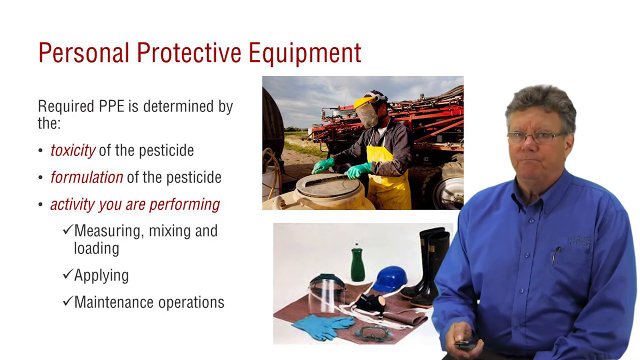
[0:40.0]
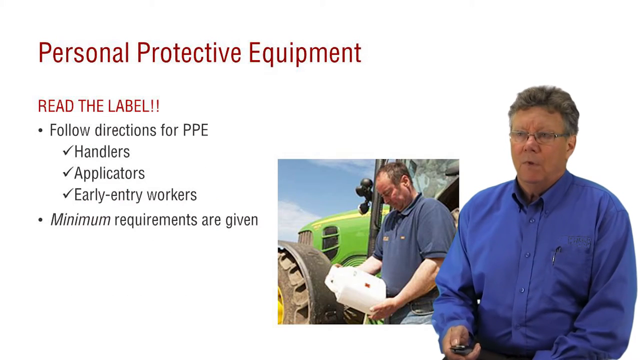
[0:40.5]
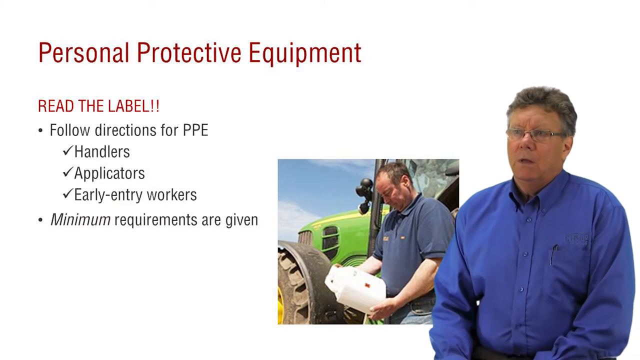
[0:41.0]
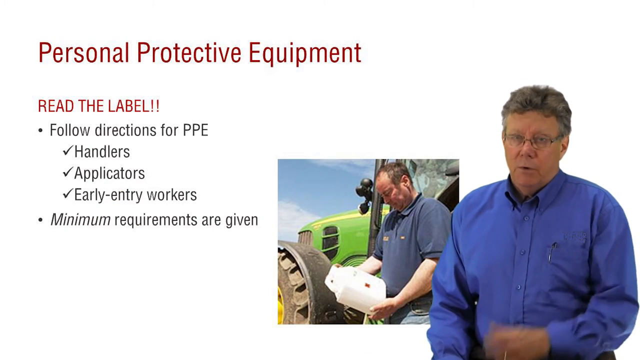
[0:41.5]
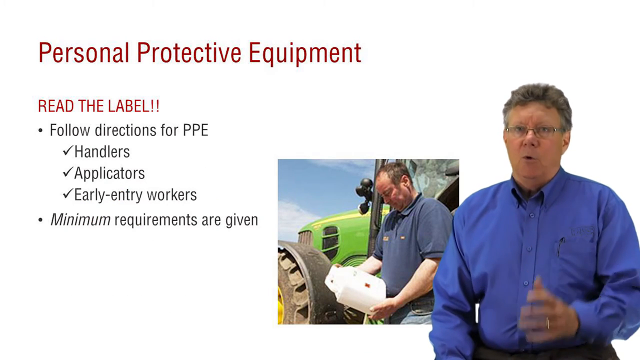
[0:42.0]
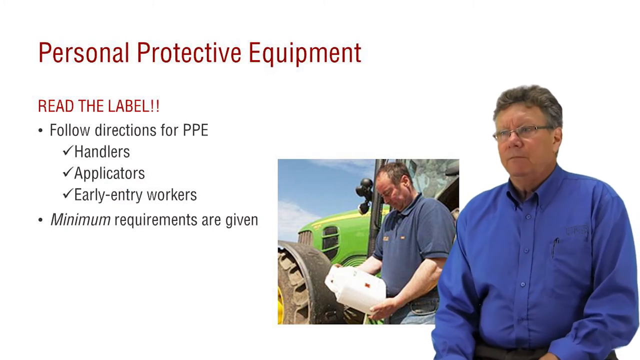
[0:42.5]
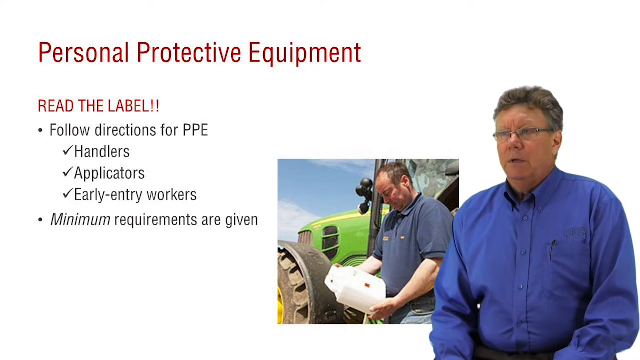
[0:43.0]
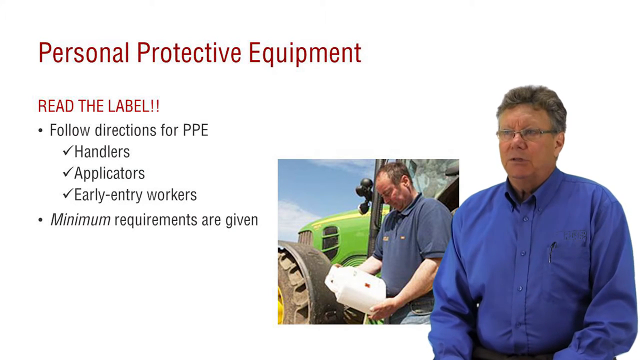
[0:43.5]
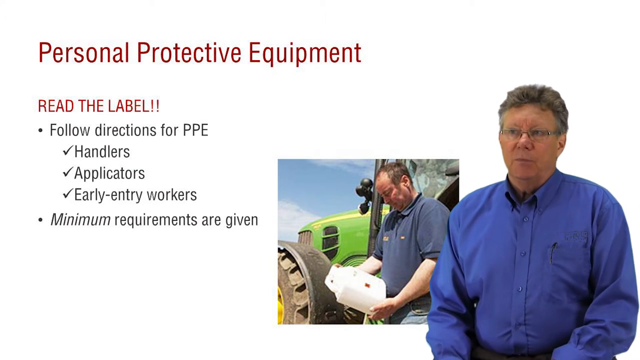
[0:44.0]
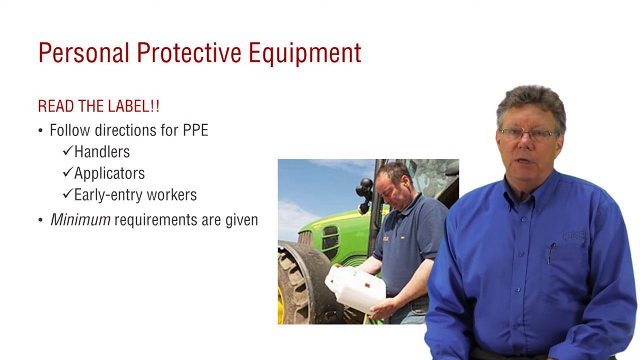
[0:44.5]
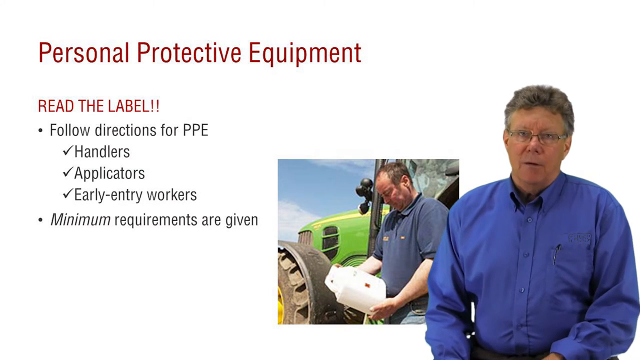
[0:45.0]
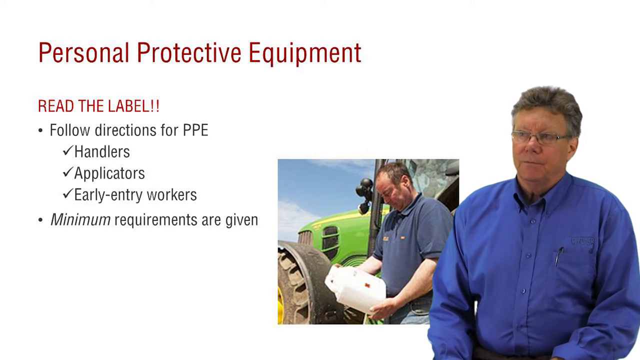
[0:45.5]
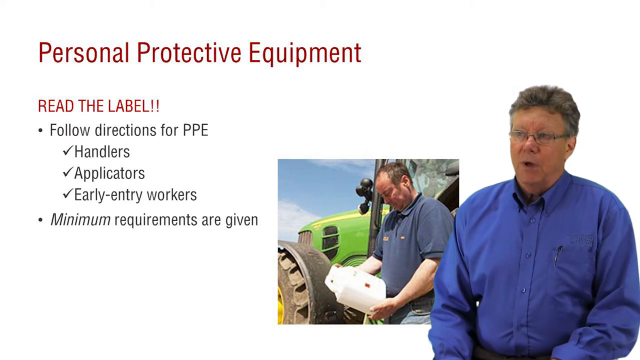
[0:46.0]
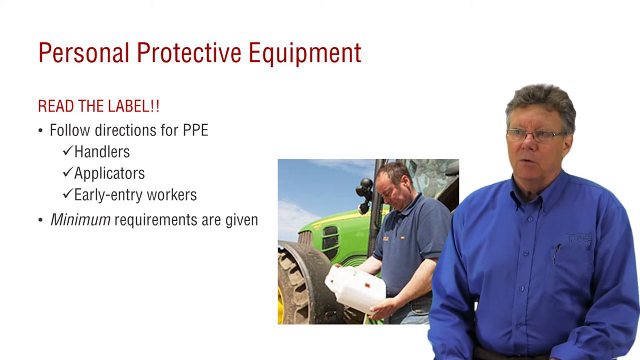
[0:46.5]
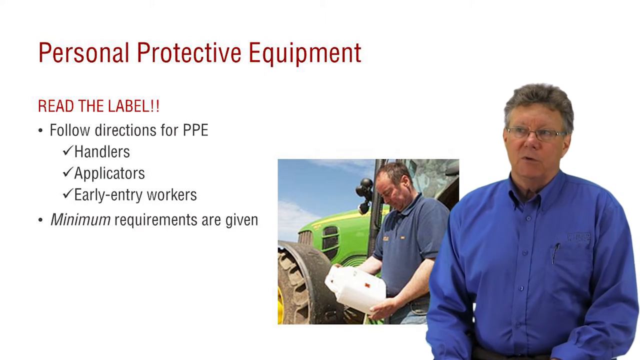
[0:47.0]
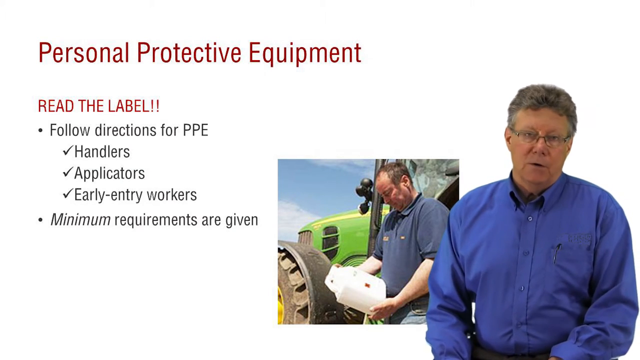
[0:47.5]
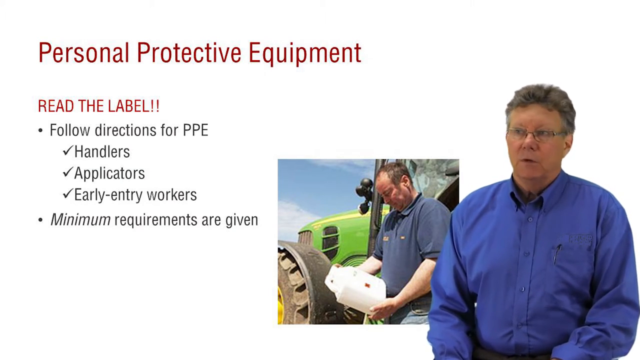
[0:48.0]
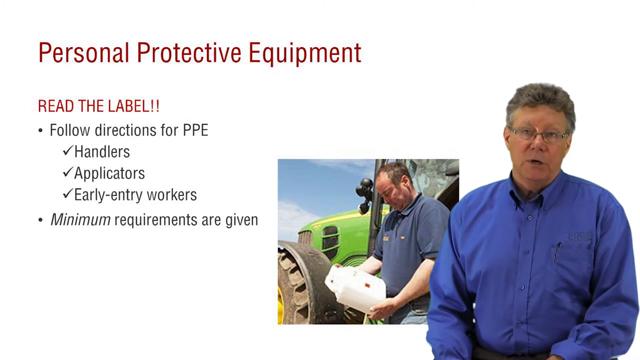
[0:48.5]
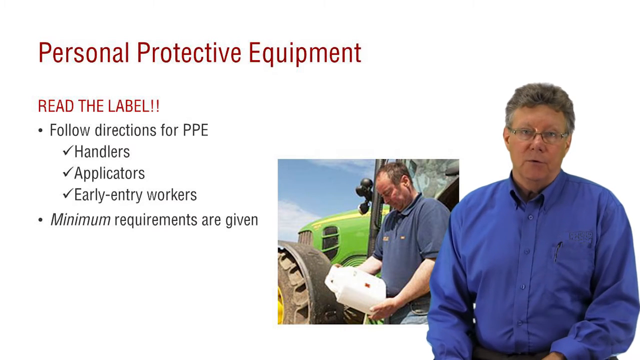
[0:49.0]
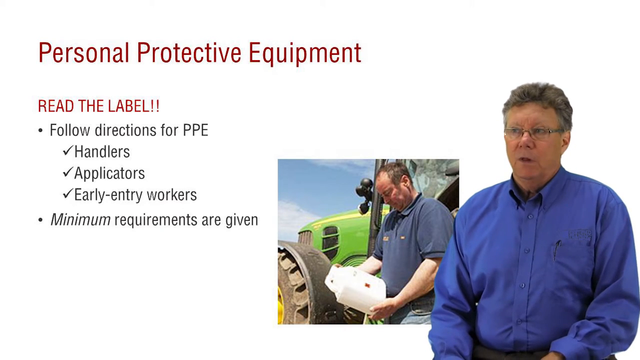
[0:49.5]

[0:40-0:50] Two images are shown. On top is a man outside working on equipment, wearing a yellow and clear helmet, a long yellow apron, long sleeves, and green gloves that go up to almost his elbows; he has something black in his left hand. Below that is other equipment: long rubber boots, a blue hard hat, brown coveralls, blue rubber gloves, headgear with a clear front, and a green bottle of what looks like detergent or something similar. Next, a man in a blue button-down shirt stands by a green tractor outside, with the sun visible, holding a jug and looking at it as he reads something. A man on the right in a long-sleeve button-down shirt and glasses is talking. Text reads "personal protective equipment. Read the label. Follow directions for PPE, handlers, applications, early entry workers. Minimum requirements are given." Then the text "toxicity of the pesticide, formulation of the pesticide, activity you're performing, measuring, mixing, and loading, applying, and maintenance operations" appears. The video goes back to the man looking at the bottle, which is clear with some red writing on it, as he reads.